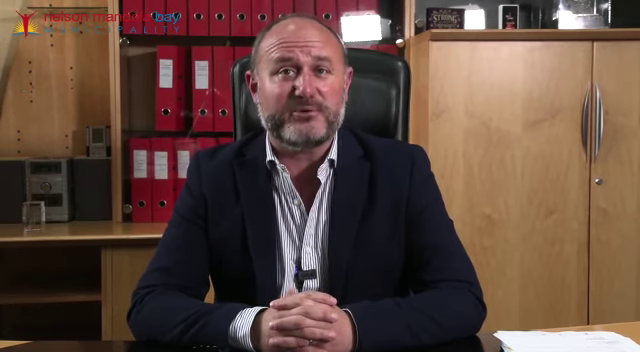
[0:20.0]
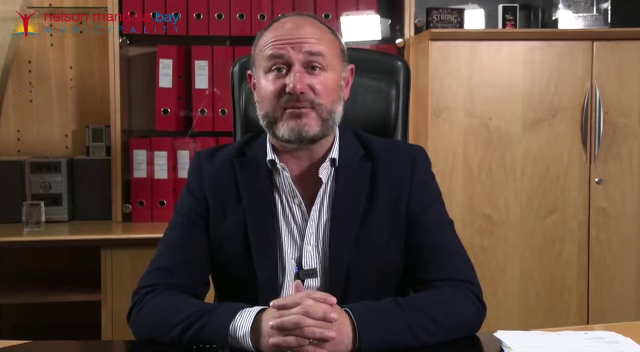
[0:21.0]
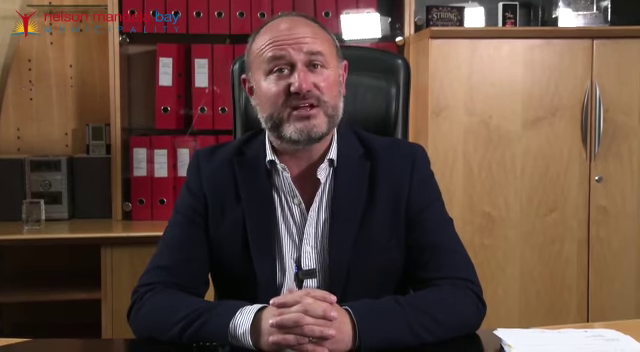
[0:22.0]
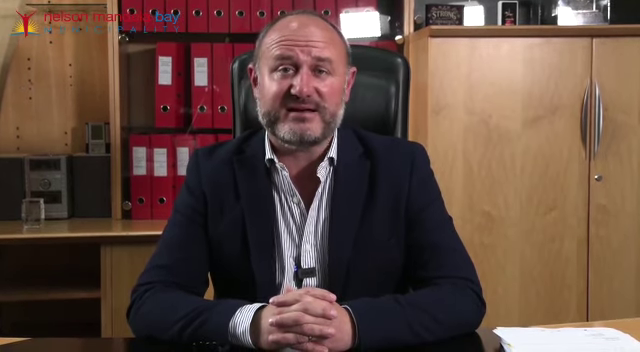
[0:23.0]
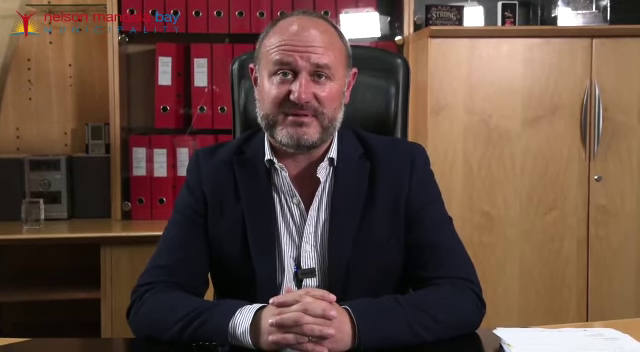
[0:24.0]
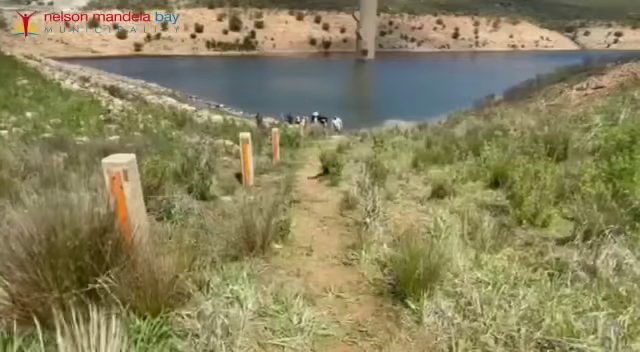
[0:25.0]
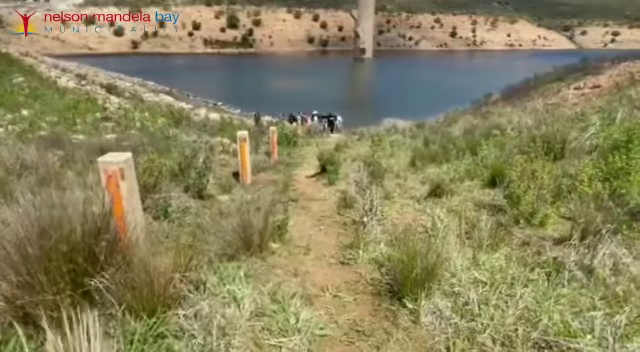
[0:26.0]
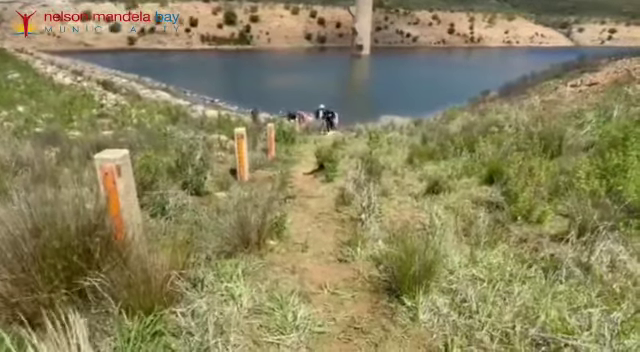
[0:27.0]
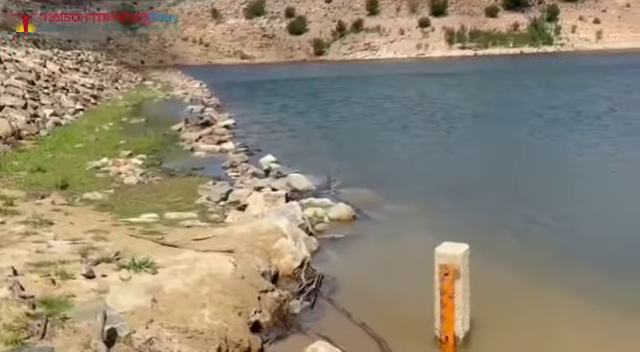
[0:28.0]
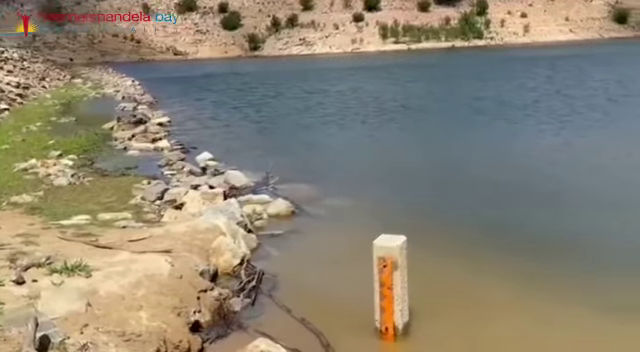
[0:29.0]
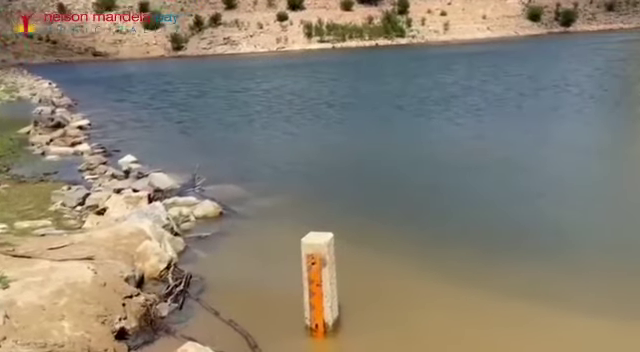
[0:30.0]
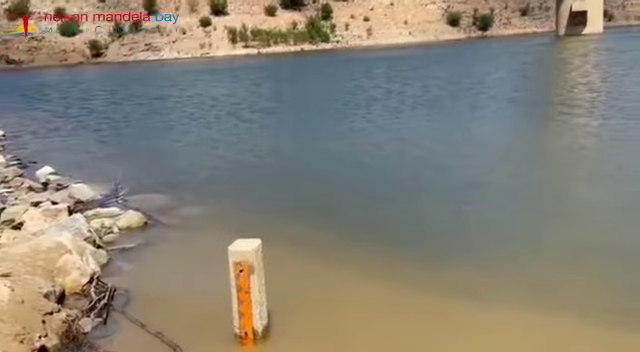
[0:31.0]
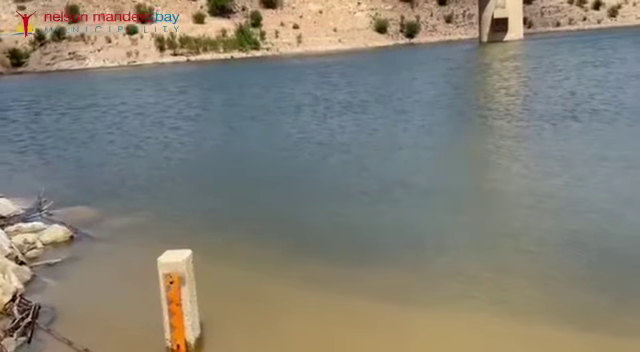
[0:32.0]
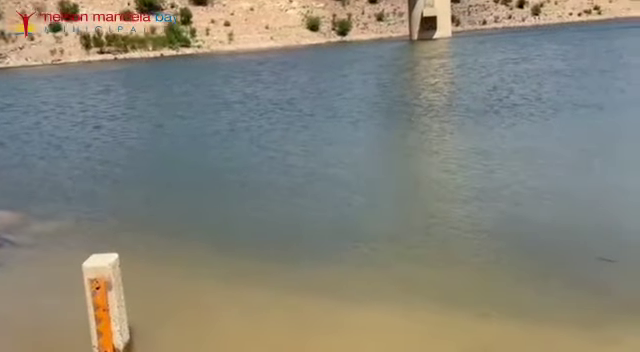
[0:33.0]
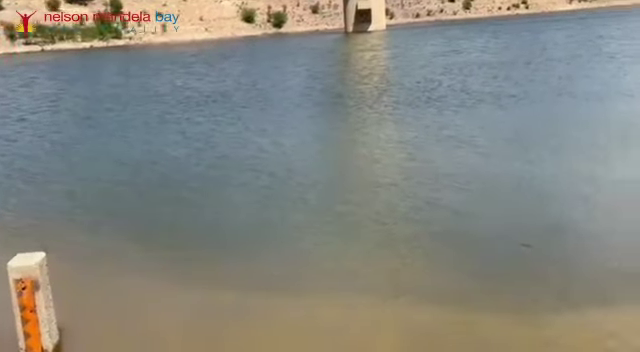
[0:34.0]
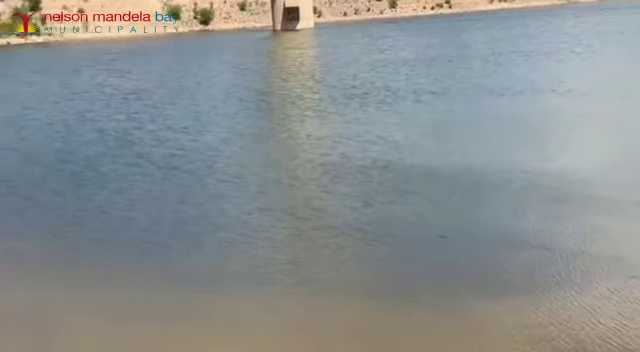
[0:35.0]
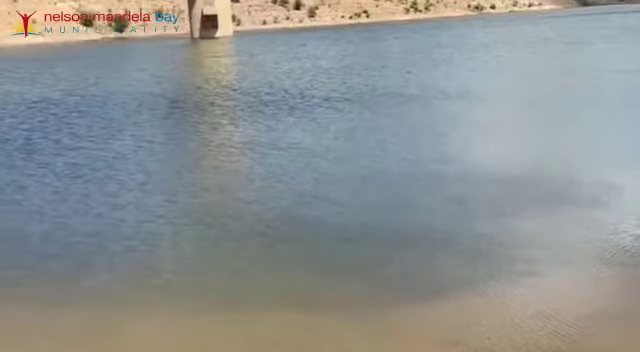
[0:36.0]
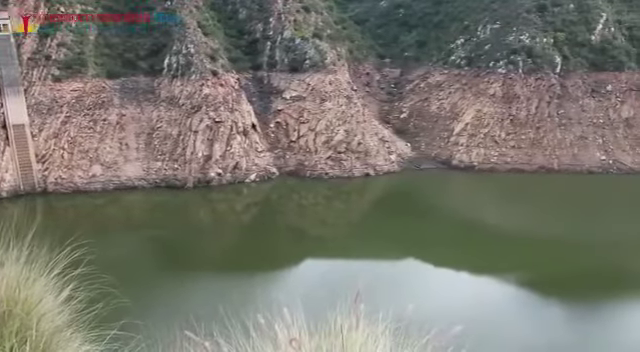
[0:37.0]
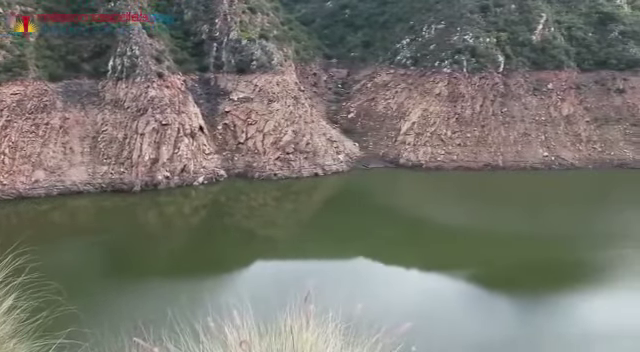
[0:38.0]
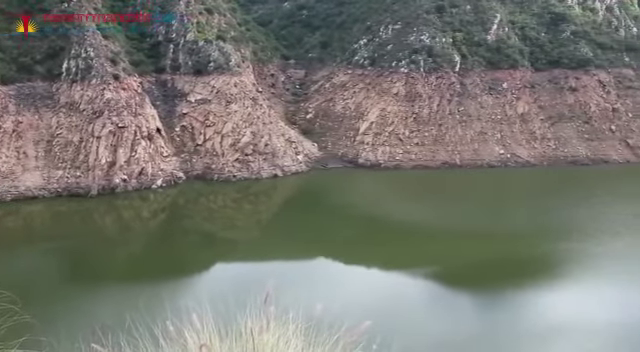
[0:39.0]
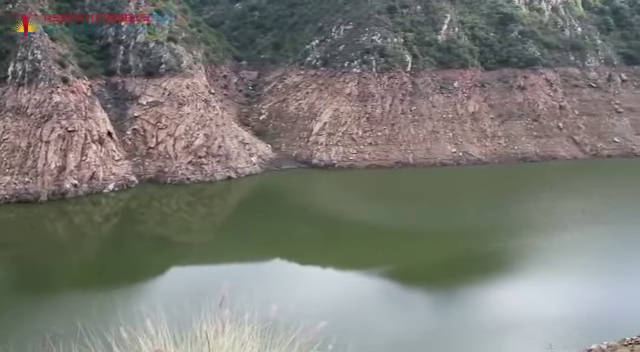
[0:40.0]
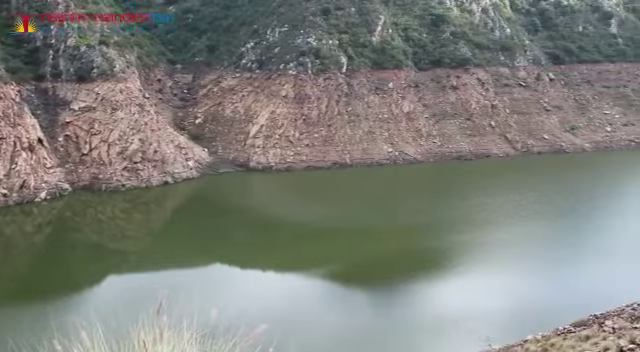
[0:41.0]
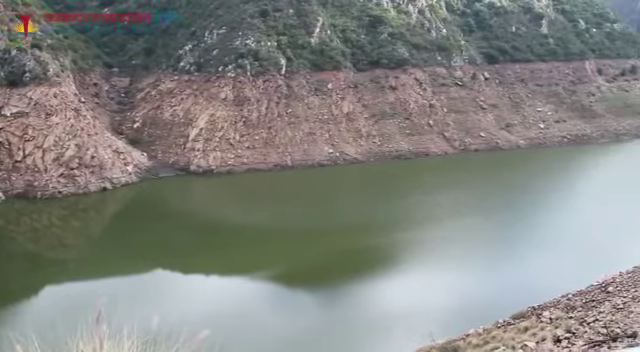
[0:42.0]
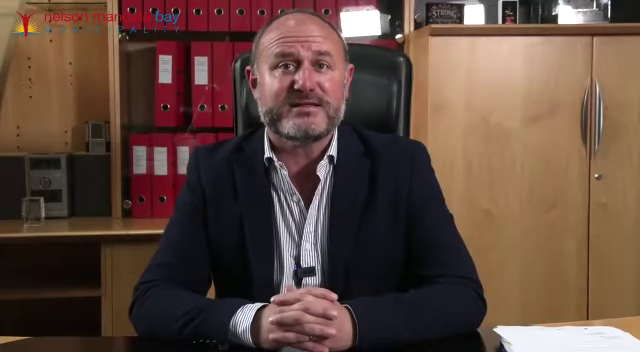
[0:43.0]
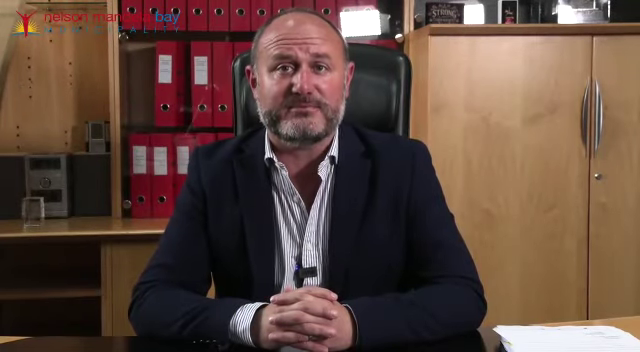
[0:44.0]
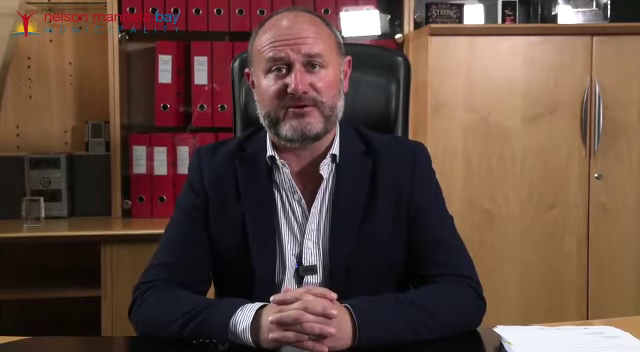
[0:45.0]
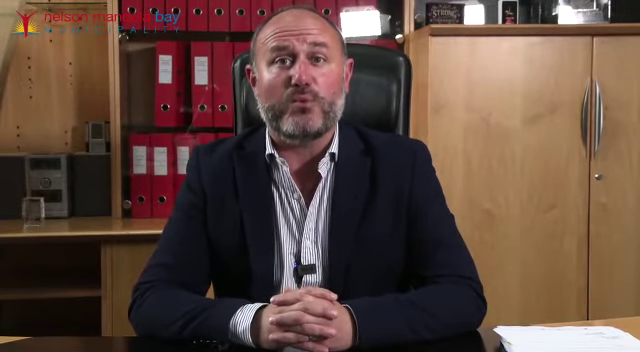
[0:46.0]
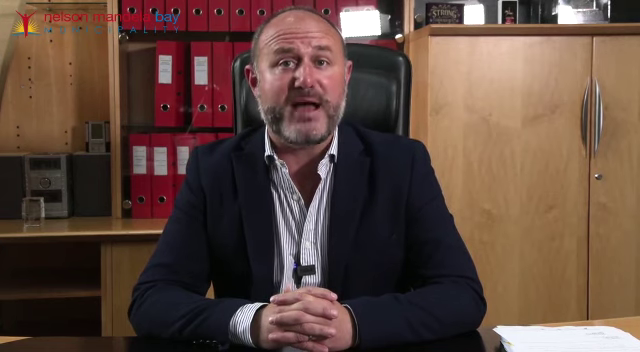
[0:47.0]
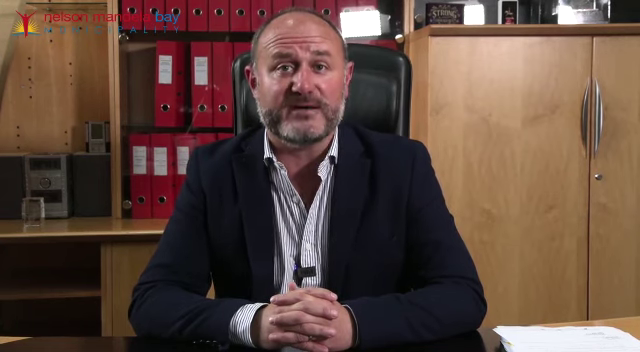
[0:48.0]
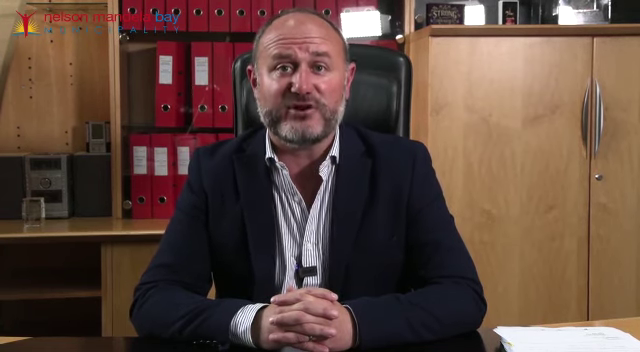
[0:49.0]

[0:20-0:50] The same man continues talking directly to the viewer in a very serious way. He wears a black vest over a white undershirt and has a gray goatee and a slightly bald head. Red folders are on a shelf in the background, and he is sitting in a chair with a very tall back. The video then cuts to outdoor footage of a small lake with a lot of water and a trail leading up to it. The water has receded from where it used to be: apparently it once reached where sticks now peek out of the water, and it has gone down to the very last stick. Much of the surrounding area where the water used to be is dried up.